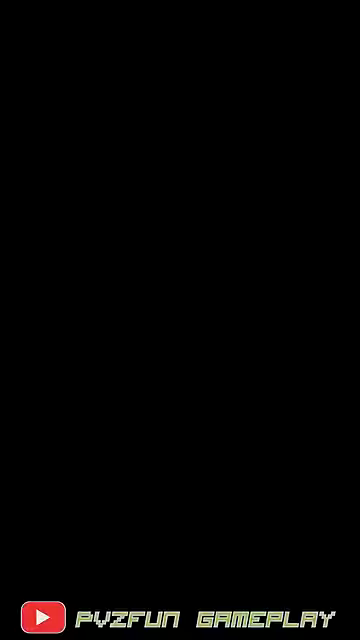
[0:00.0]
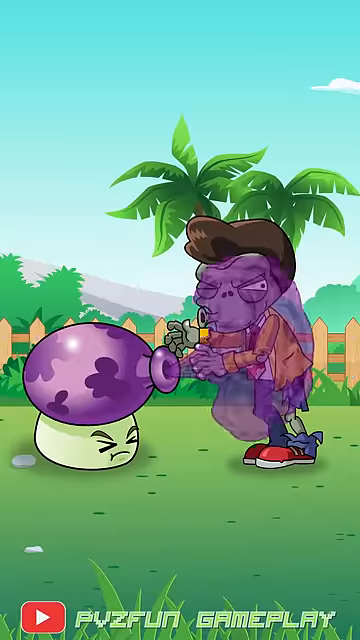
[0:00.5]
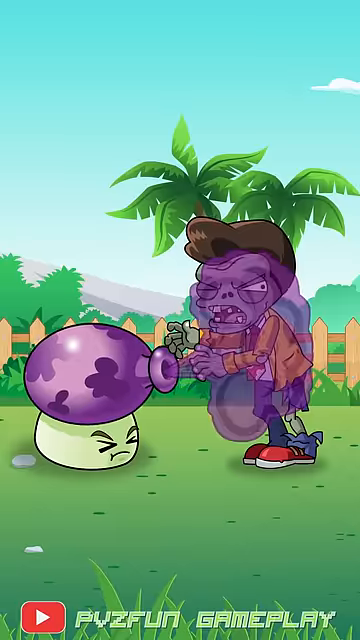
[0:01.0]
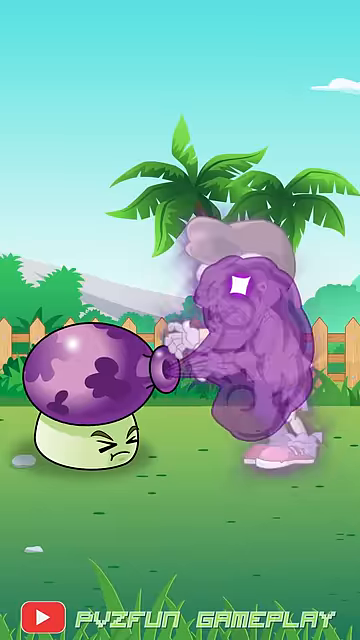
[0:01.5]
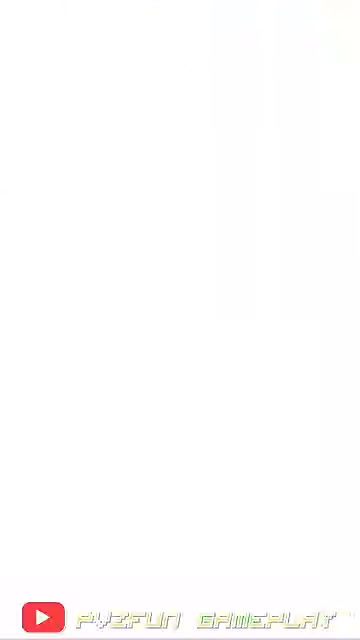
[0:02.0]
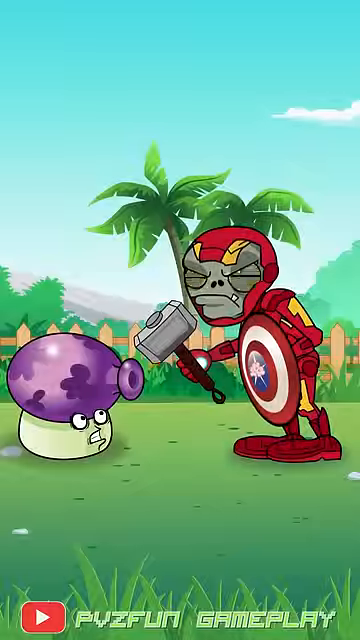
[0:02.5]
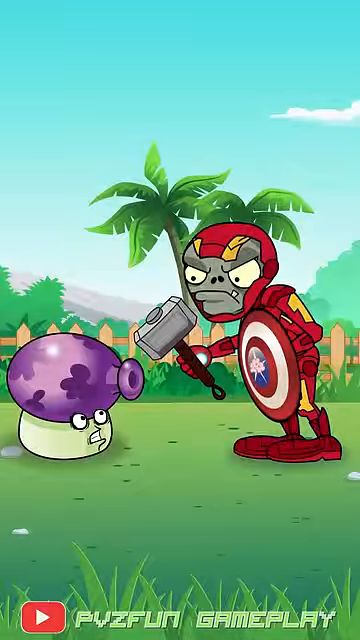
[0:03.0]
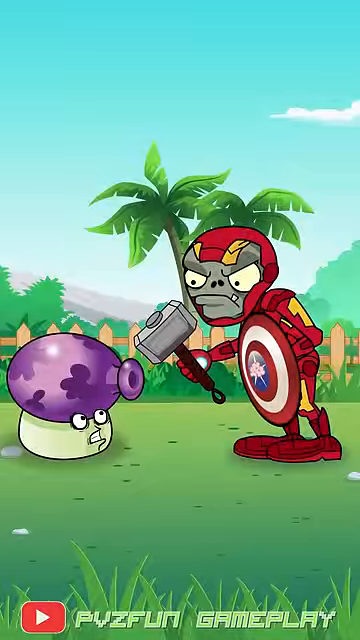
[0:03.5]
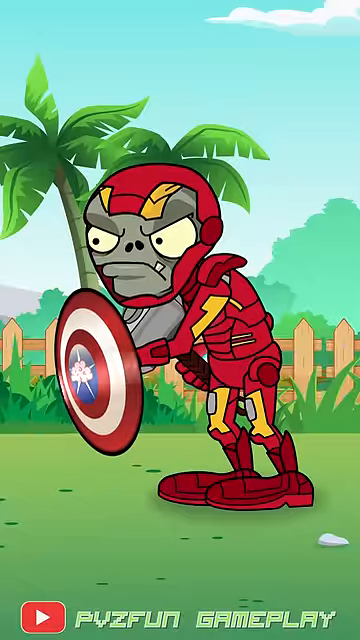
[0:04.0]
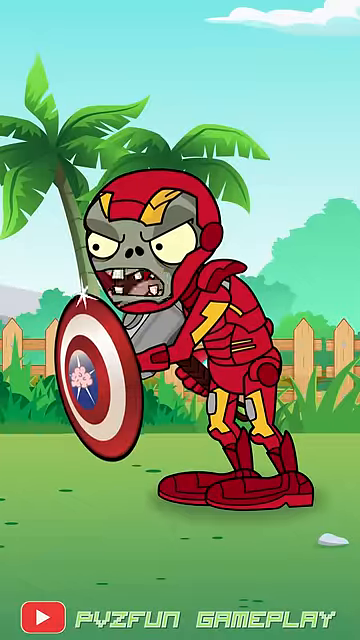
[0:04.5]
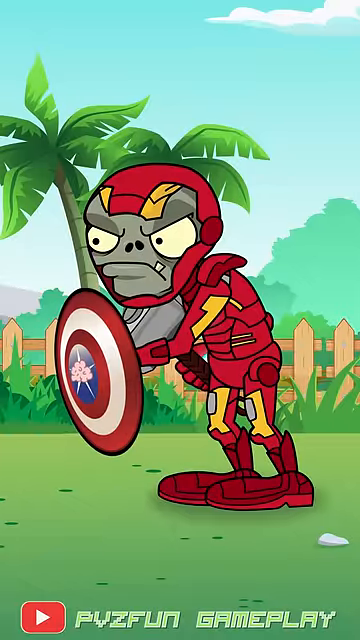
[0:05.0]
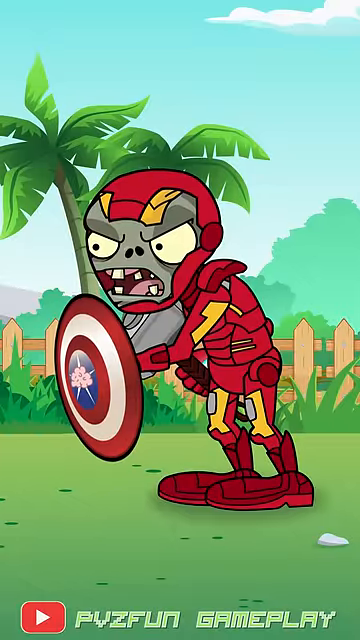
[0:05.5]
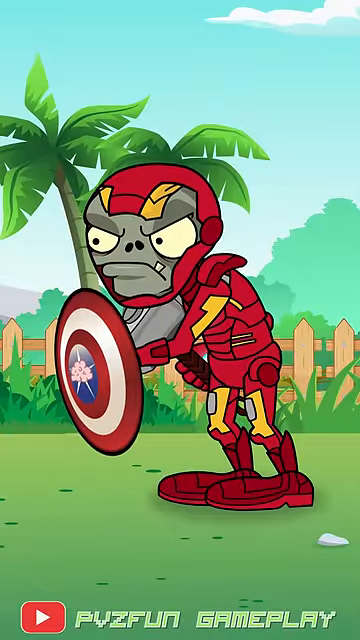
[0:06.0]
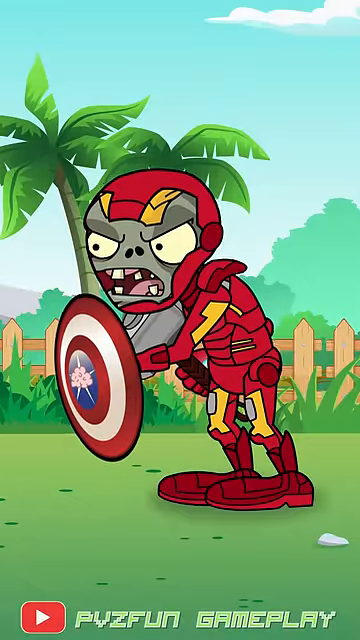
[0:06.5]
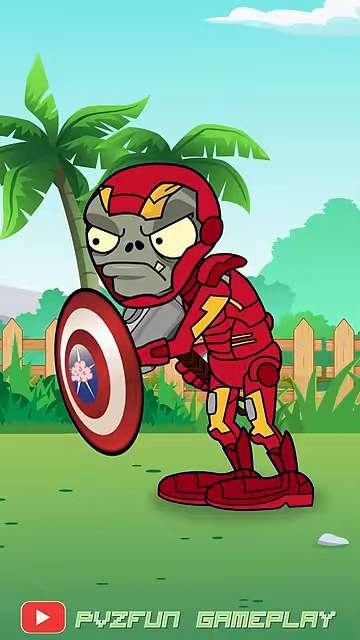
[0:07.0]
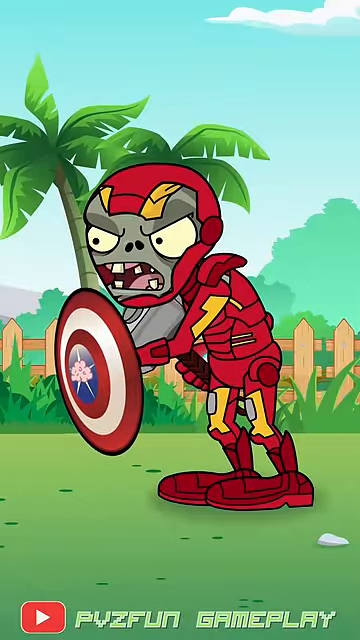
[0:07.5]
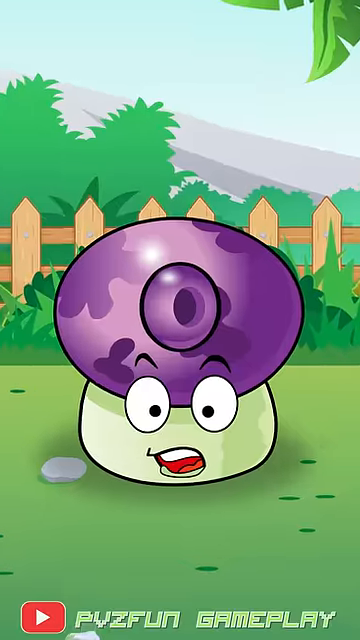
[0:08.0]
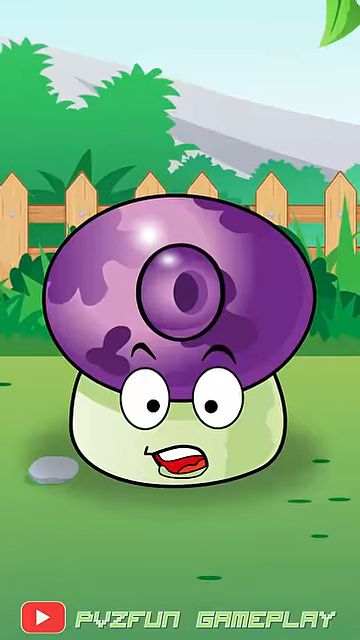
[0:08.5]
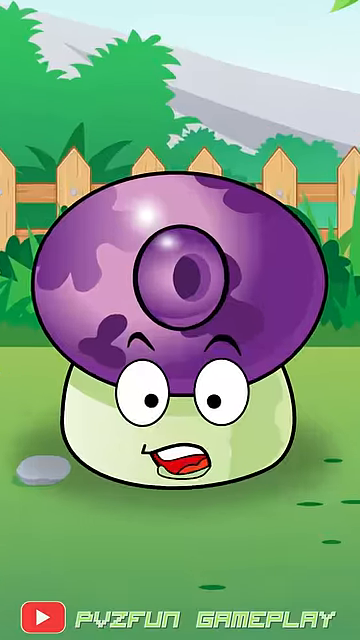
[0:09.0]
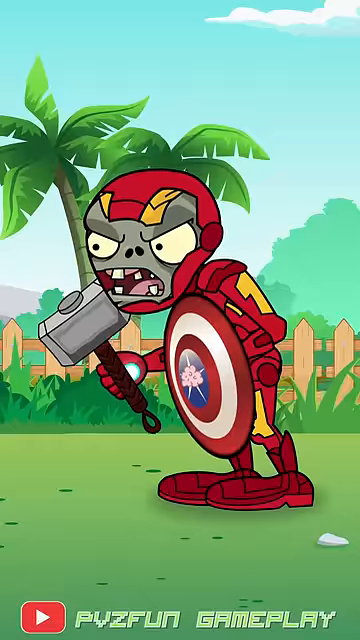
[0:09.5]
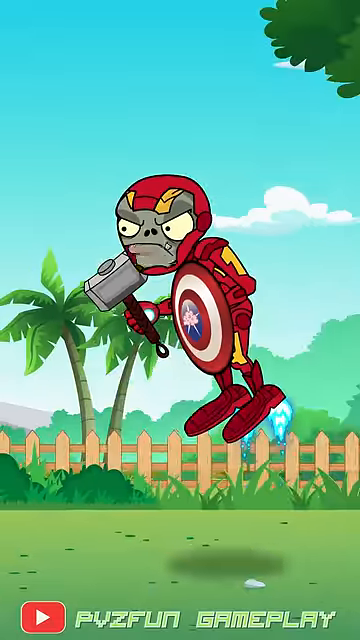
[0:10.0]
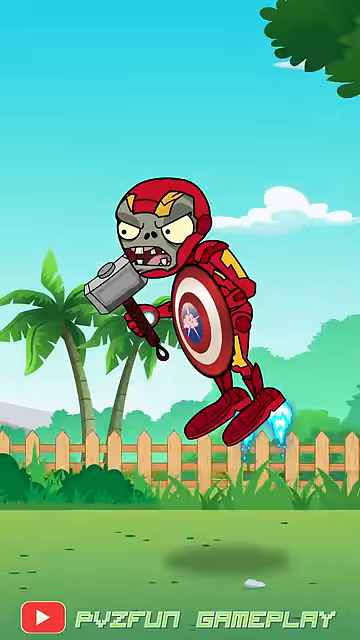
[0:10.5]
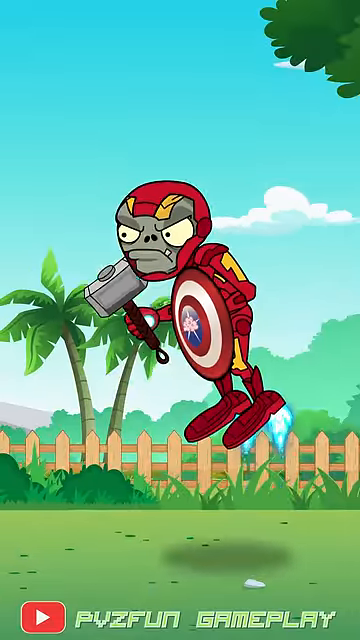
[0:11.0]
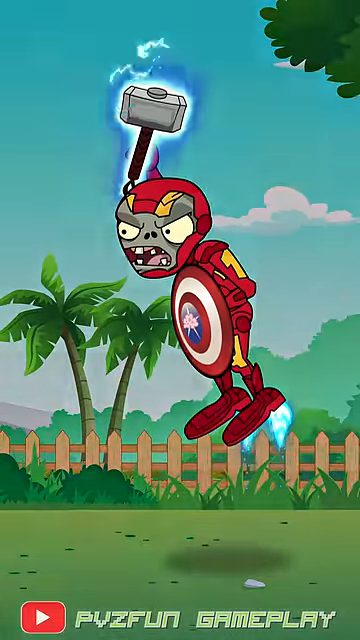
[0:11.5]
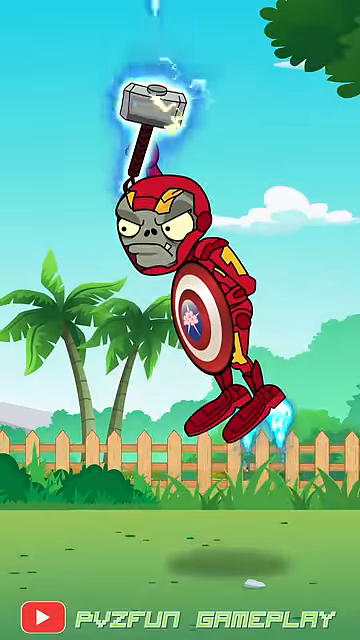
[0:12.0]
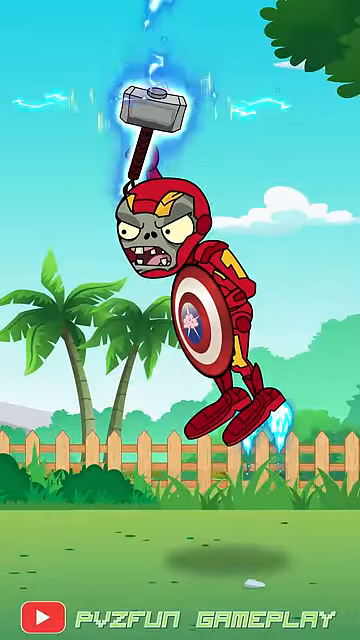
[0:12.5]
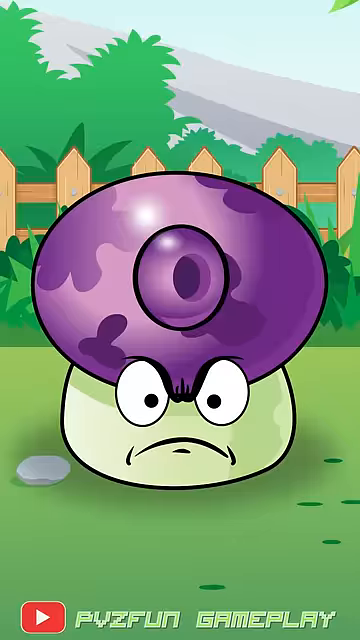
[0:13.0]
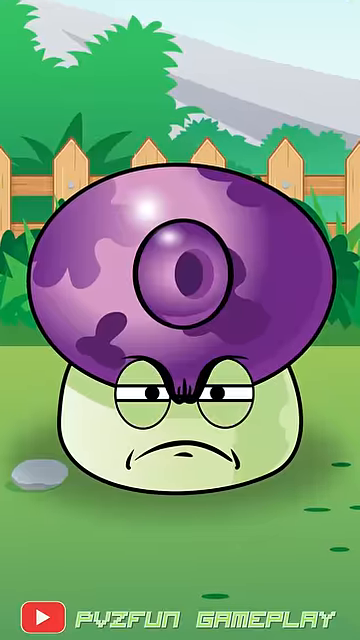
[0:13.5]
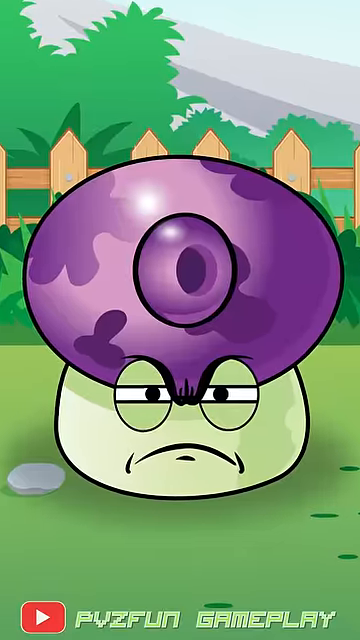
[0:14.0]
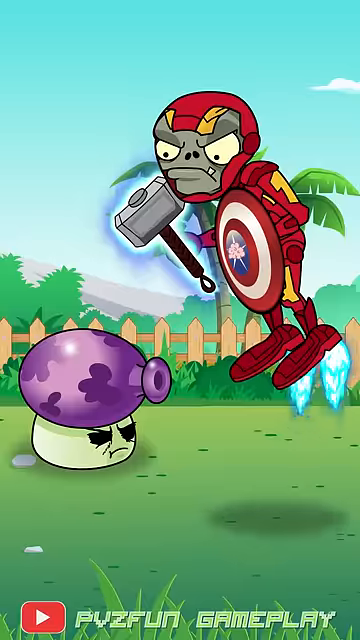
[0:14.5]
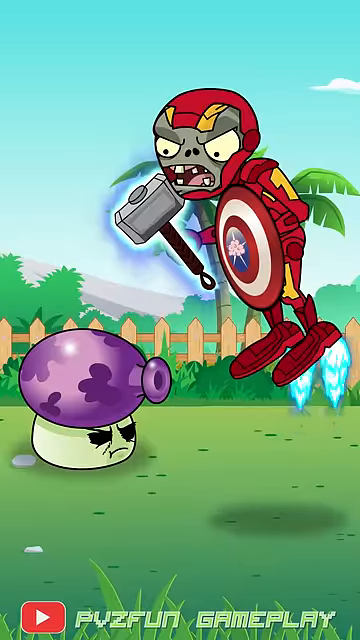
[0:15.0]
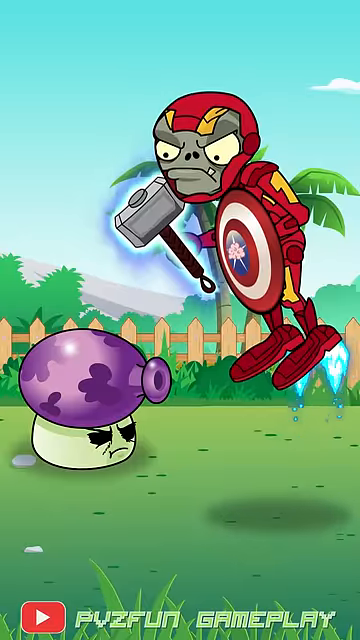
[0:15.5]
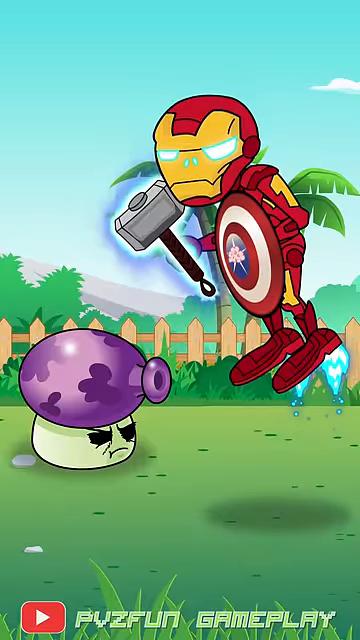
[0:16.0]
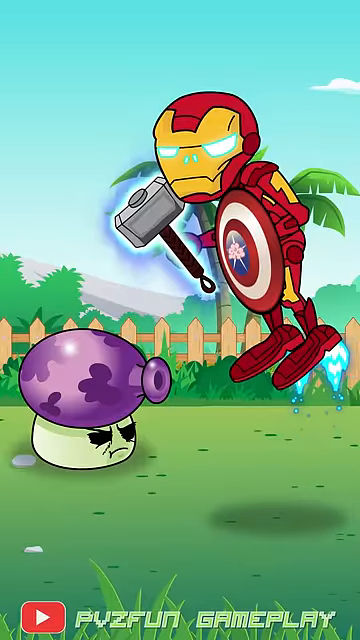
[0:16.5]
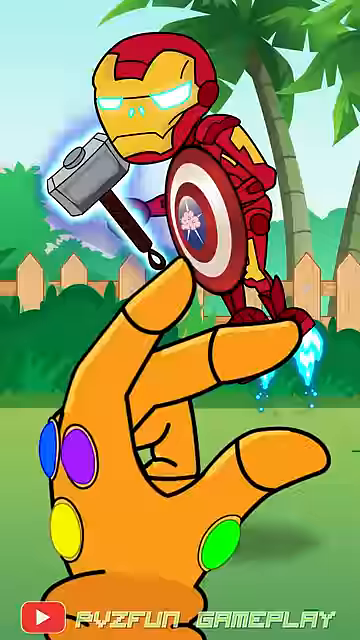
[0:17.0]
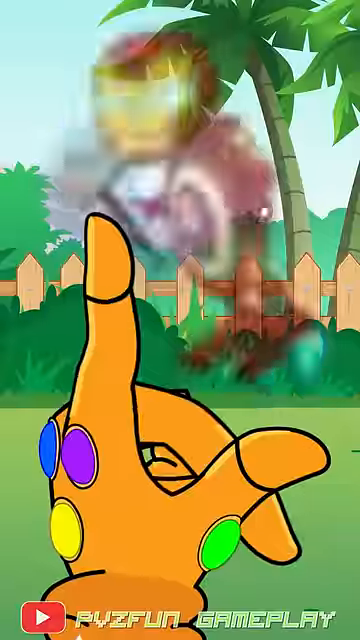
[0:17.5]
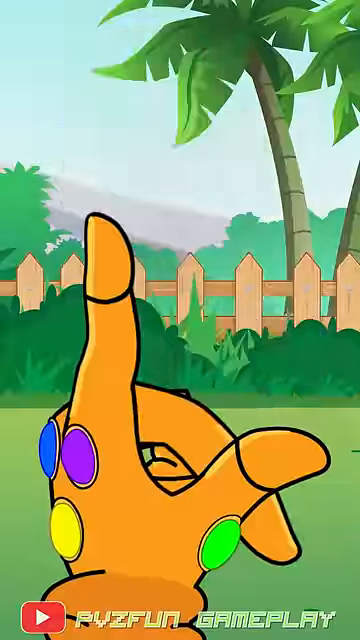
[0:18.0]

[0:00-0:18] Plants are sitting on the ground with mad faces, facing a group of zombies. One zombie is dressed up as Captain America: he has Captain America's shield in one hand and what looks like a metal hammer in the other. After a back-and-forth conversation between a plant and the zombie, at the end a person's hand comes into the middle of the screen. The hand is very large compared to everything else on screen and appears to be wearing an orange glove. On top of it are dots with white outlines around them, one blue, one purple and one yellow, and there is a green button on the thumb. The hand flicks the Captain America zombie out.